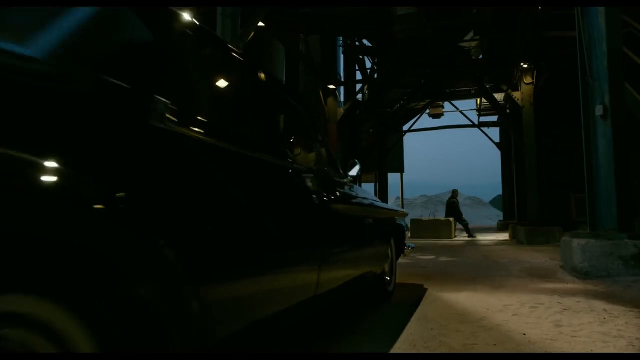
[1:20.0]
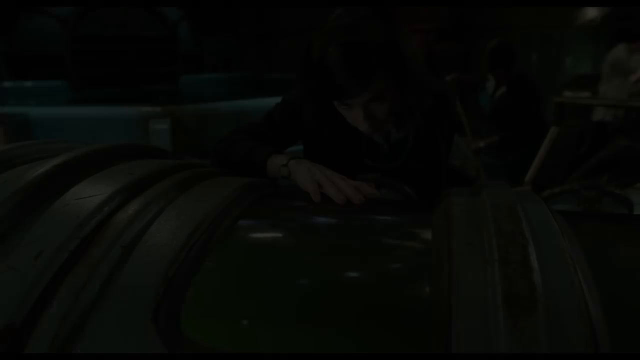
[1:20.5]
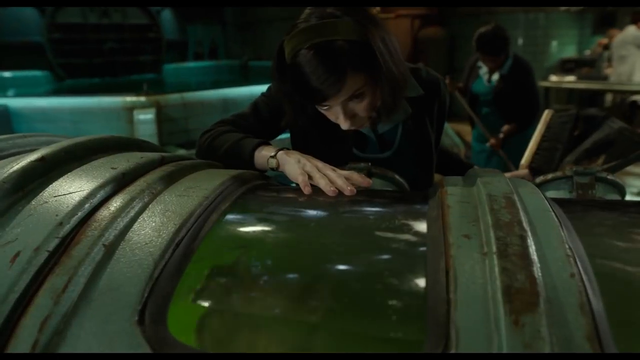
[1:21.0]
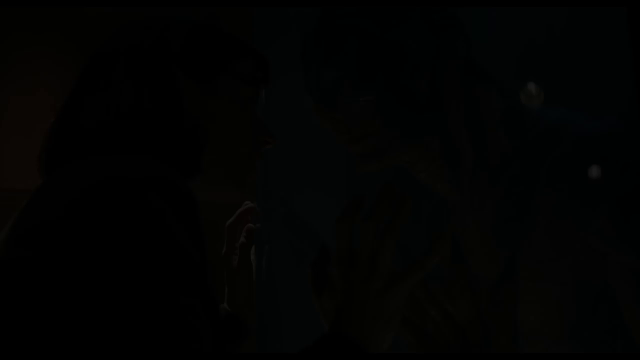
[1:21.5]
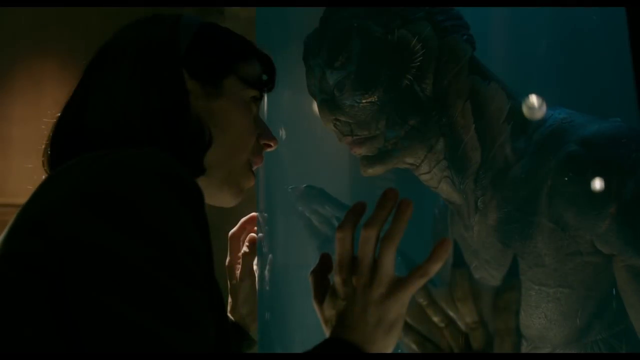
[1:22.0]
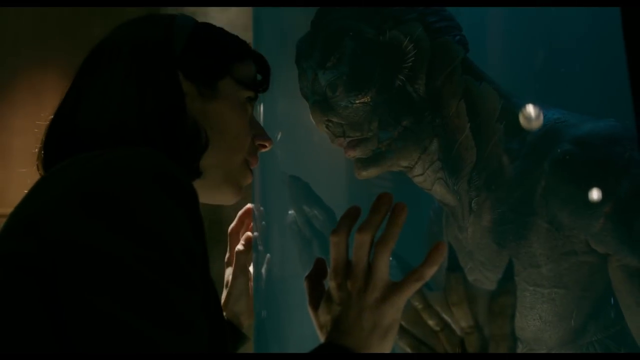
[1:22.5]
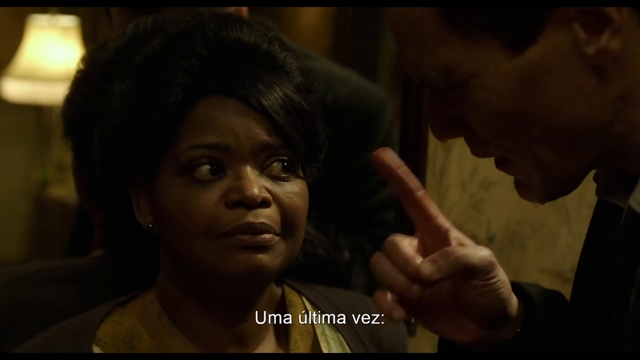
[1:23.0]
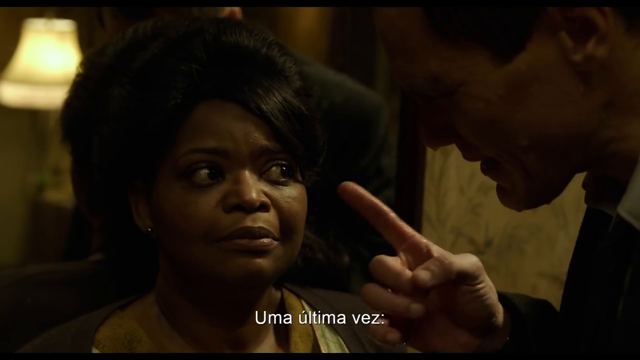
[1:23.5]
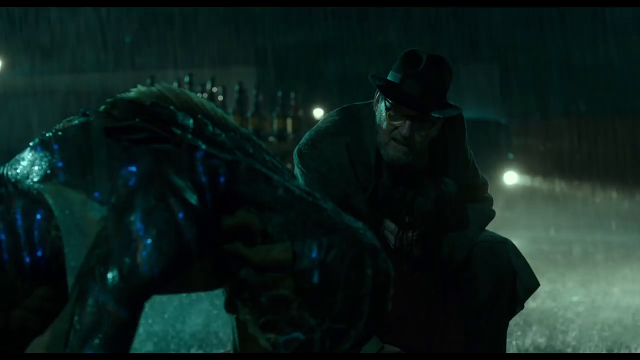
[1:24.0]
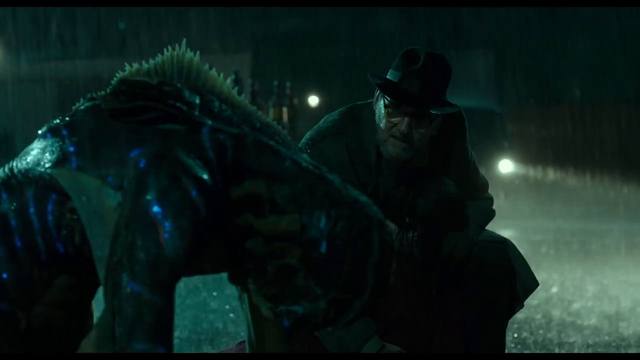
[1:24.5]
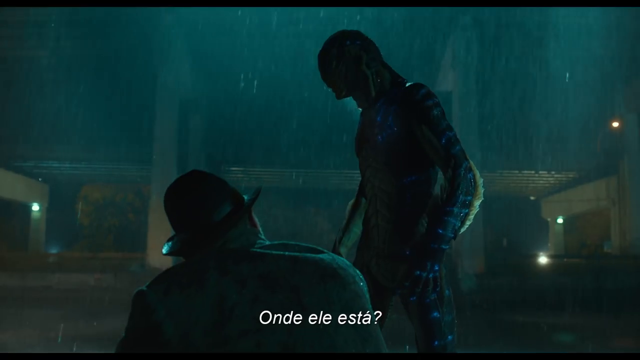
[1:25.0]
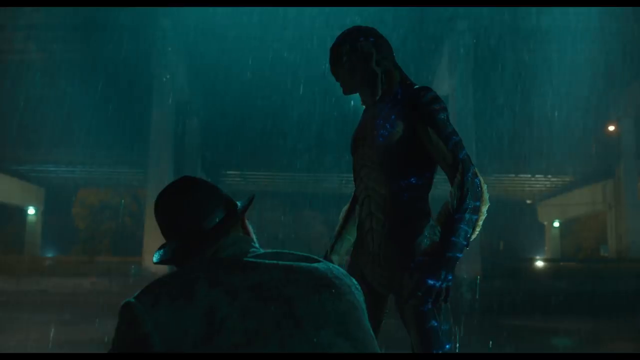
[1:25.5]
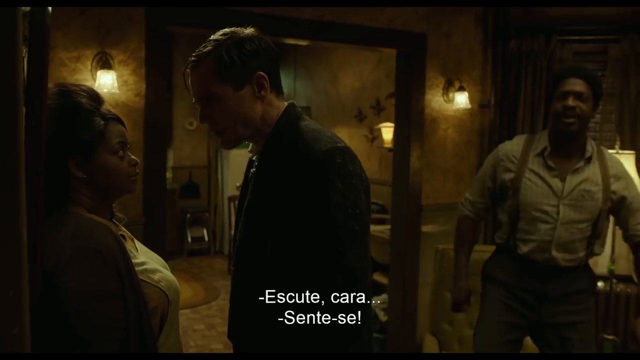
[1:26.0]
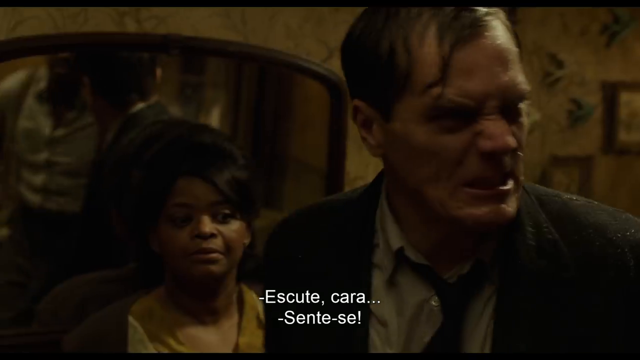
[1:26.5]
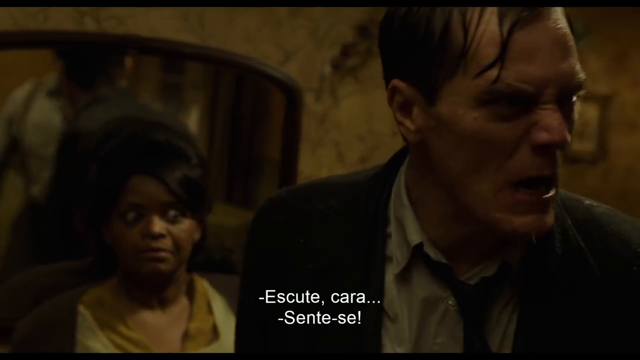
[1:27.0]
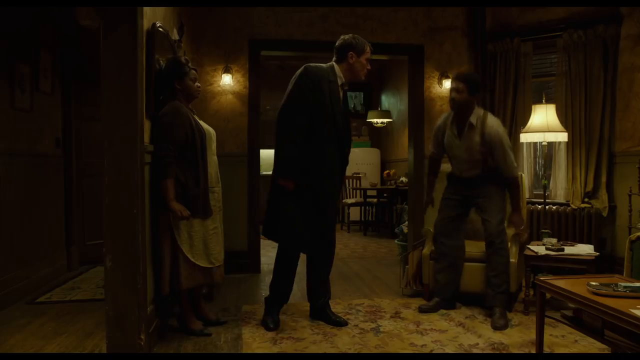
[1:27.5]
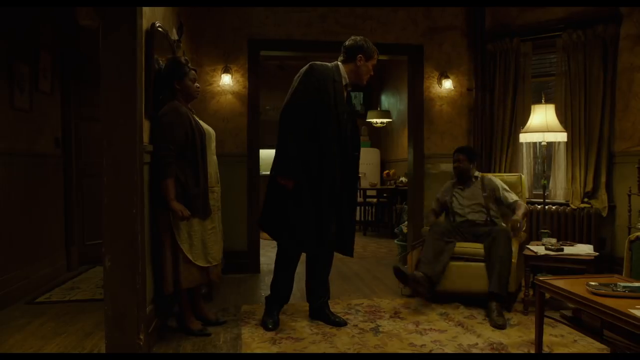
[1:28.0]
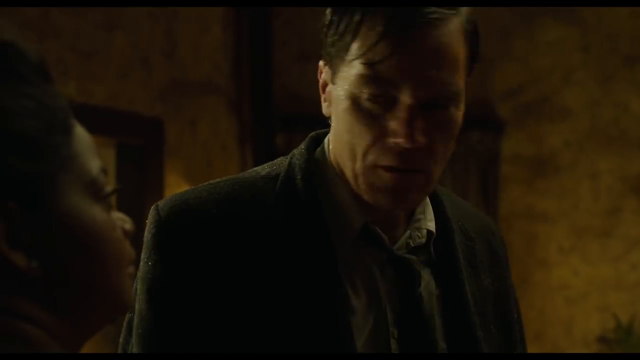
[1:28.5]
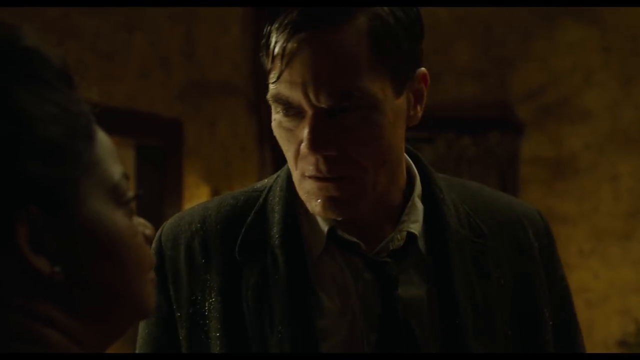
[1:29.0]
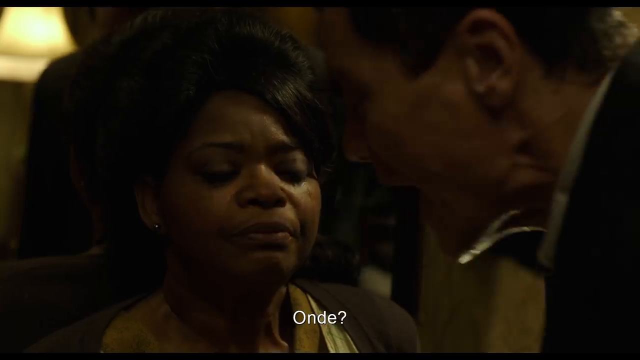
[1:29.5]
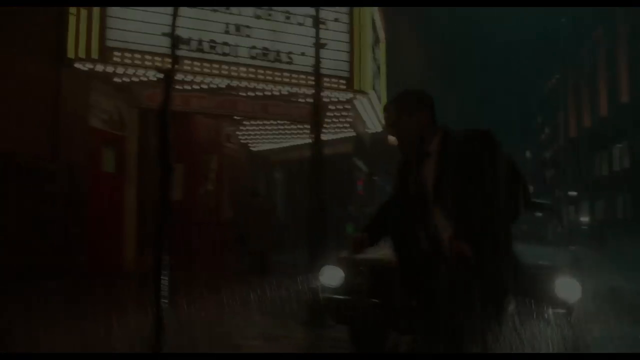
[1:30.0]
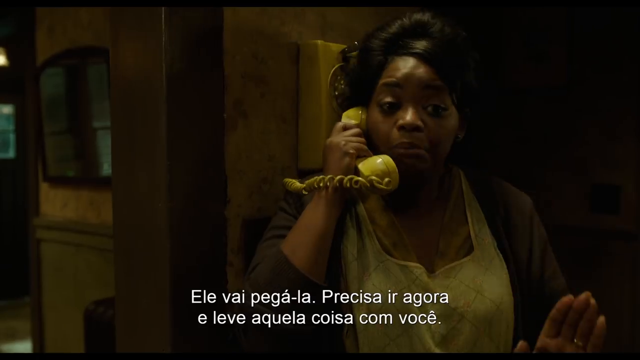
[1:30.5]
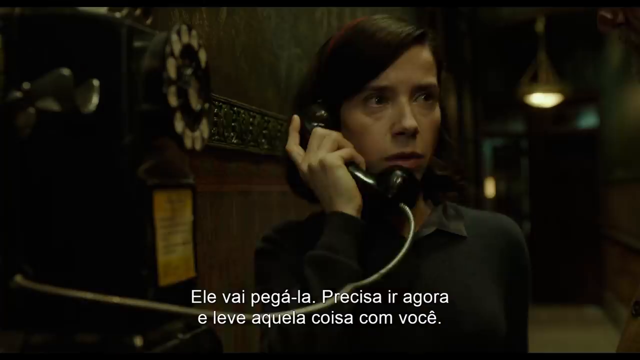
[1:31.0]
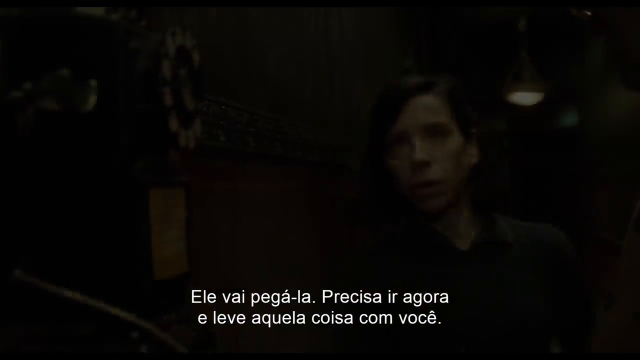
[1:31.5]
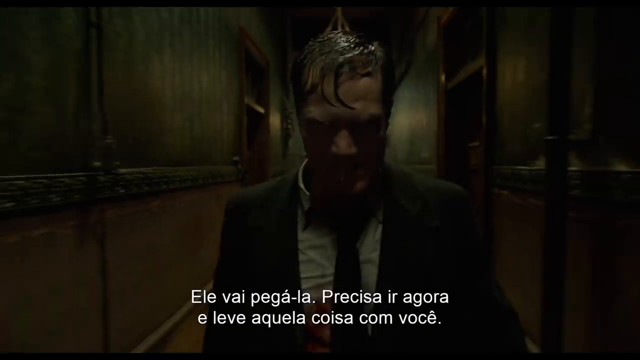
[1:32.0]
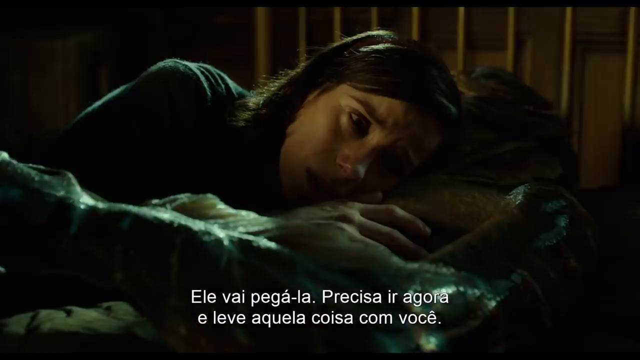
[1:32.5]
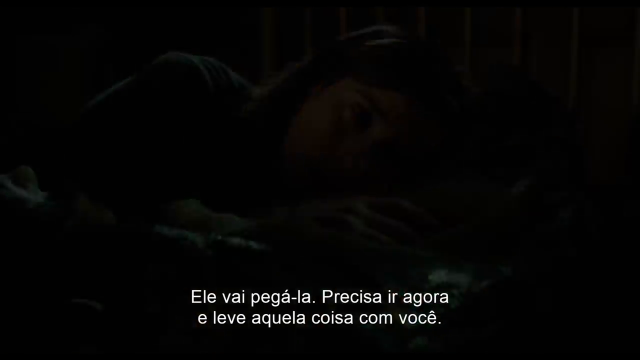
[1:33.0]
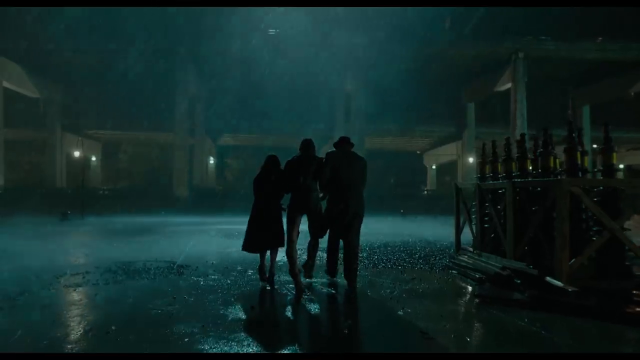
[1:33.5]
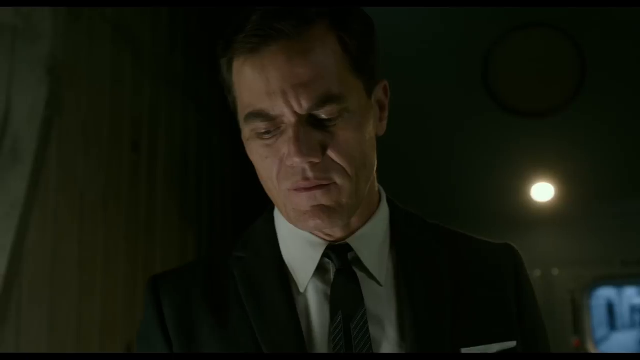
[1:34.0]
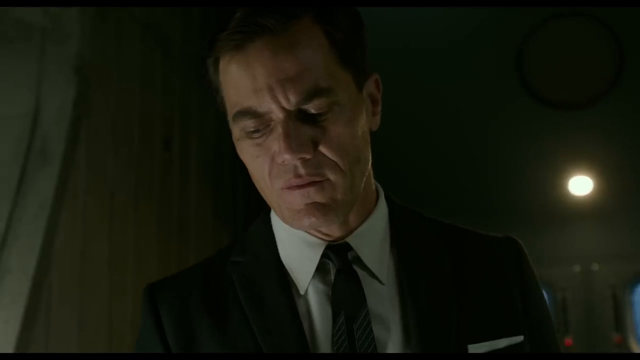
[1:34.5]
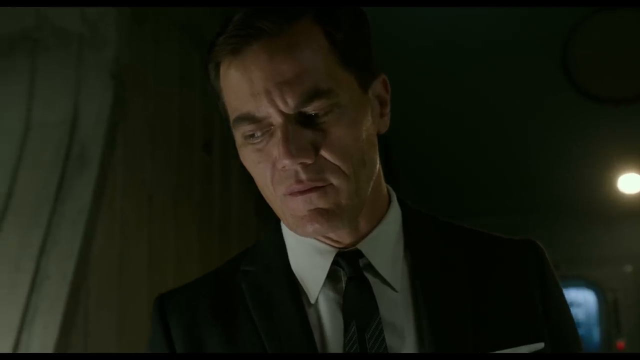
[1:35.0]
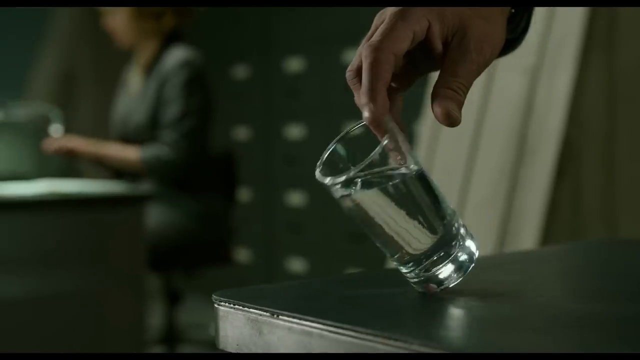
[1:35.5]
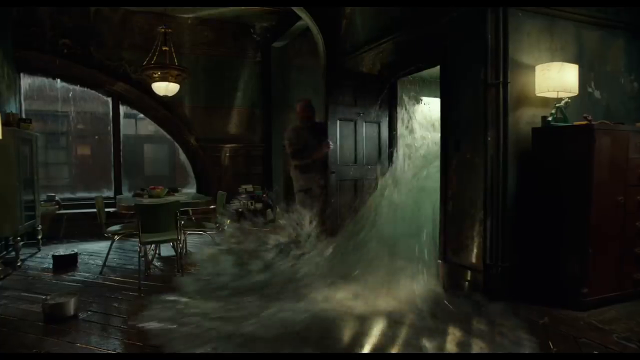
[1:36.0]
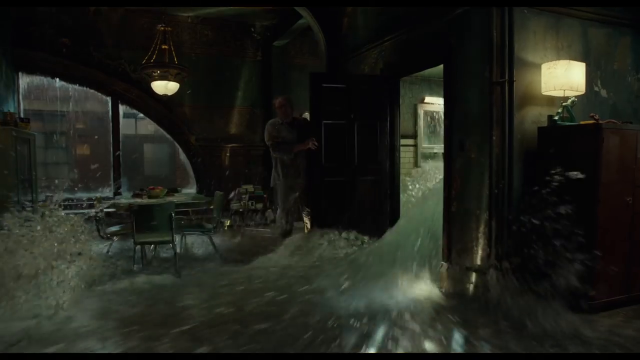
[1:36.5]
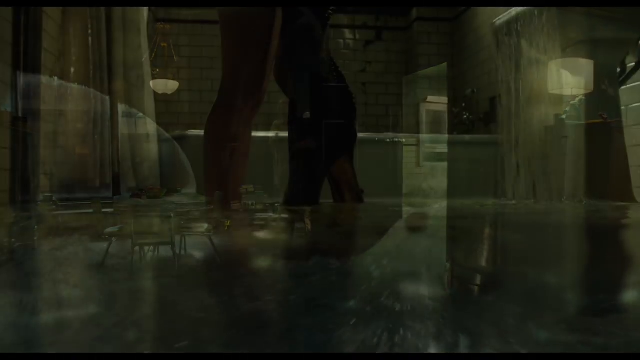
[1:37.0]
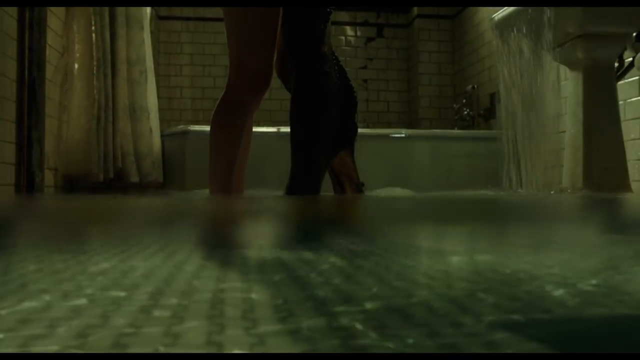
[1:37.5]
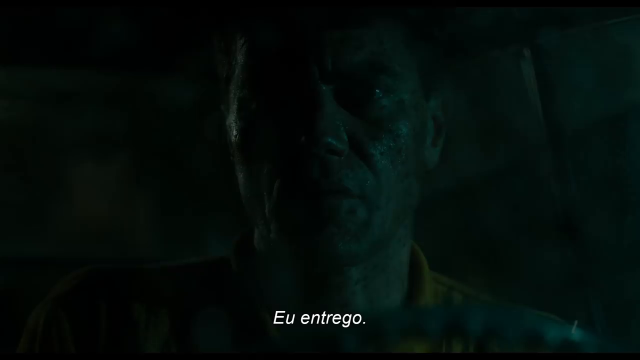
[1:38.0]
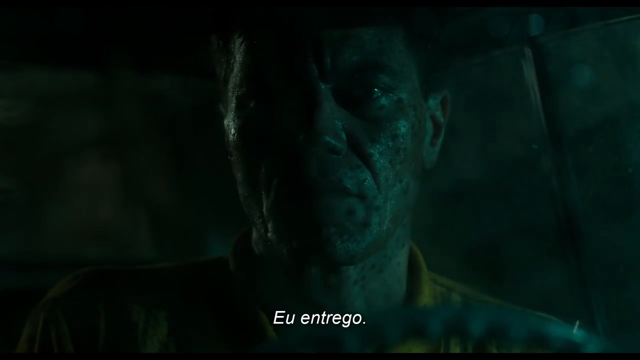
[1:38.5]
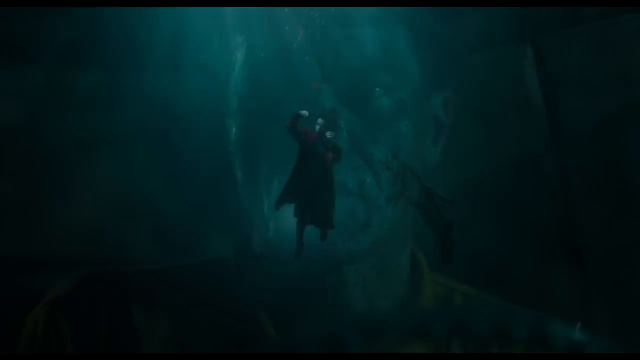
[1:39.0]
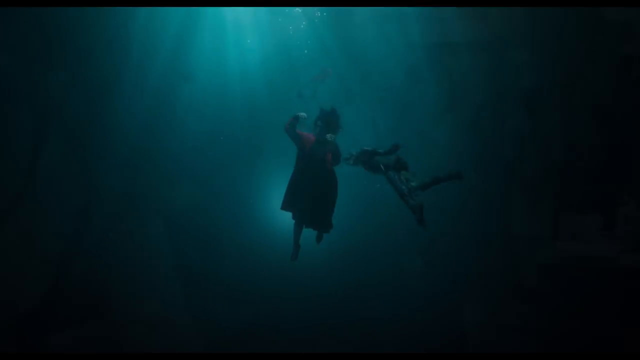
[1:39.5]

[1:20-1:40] A dim, low-light space appears to be a garage, with a car inside, though a silhouette of someone sitting on what appears to be a bale of hay near the doorway suggests it might be a barn; it is hard to make out much. Next, a woman leans over a container with a window, her right hand on top of the window. She taps on the window and something appears out of the fluid inside the container. A woman on the left side of the screen then stands next to a glass-looking container with her hands on the side of the glass, and an alien-looking creature is inside. The scene changes to an African descent-looking woman with dark brown or black hair on the left side of the screen and a Caucasian man on the right pointing his finger at her and talking to her. Next, a man is outside in the rain outside a big facility, with something that looks alien. Then, inside a house, an African descent woman, a Caucasian man and an African descent man appear to be arguing and talking. Finally, a man is outside what appears to be a theater.